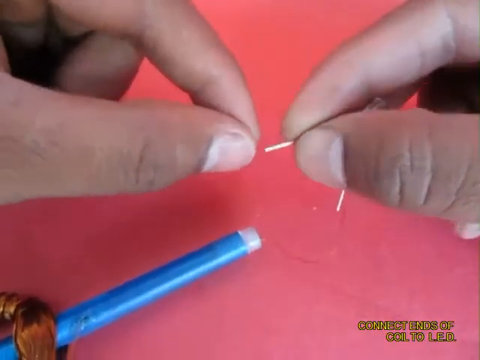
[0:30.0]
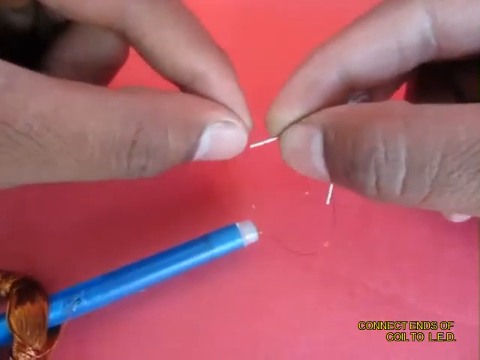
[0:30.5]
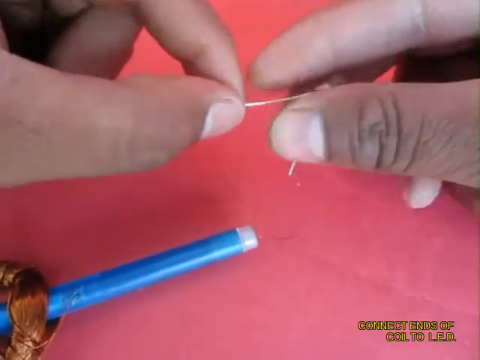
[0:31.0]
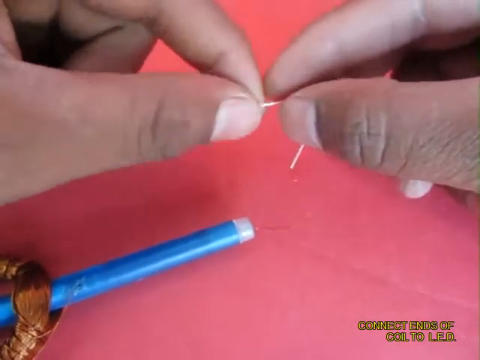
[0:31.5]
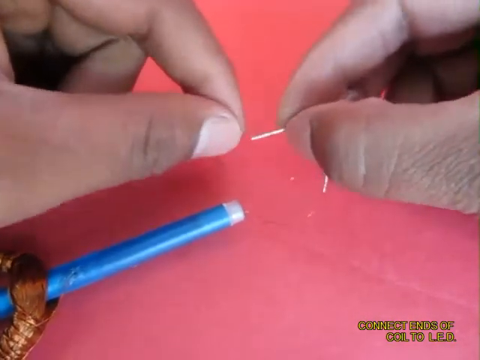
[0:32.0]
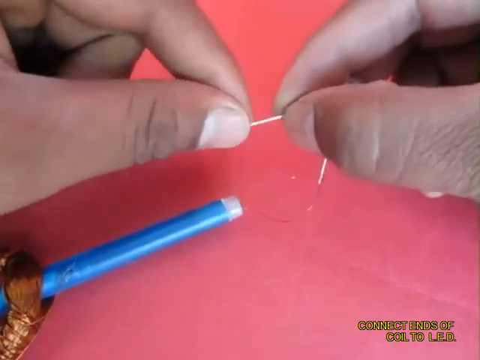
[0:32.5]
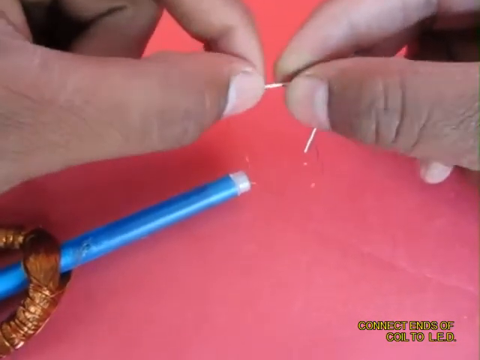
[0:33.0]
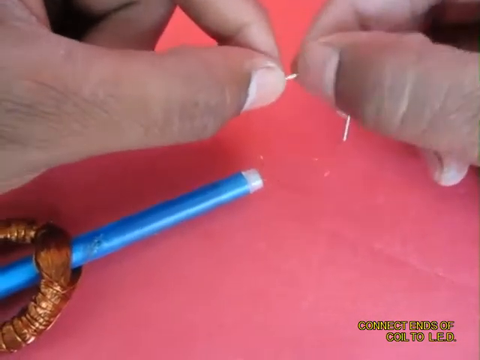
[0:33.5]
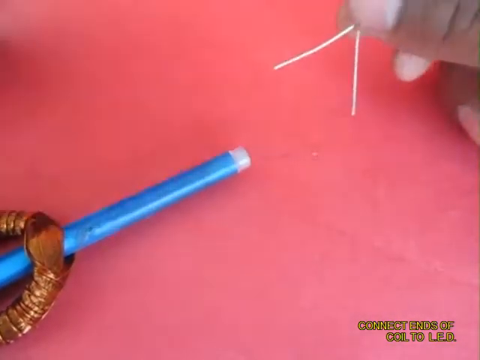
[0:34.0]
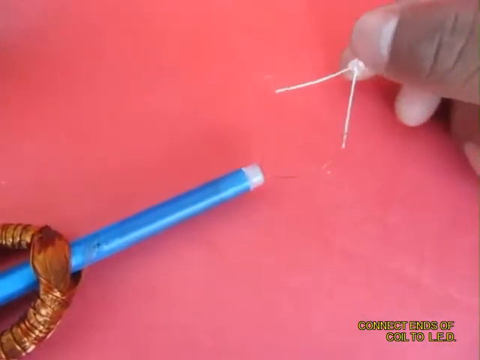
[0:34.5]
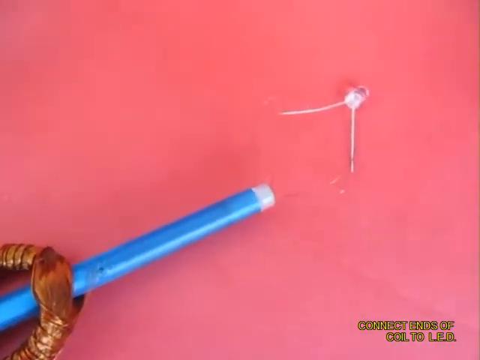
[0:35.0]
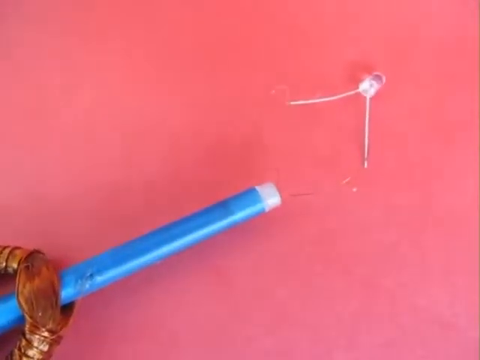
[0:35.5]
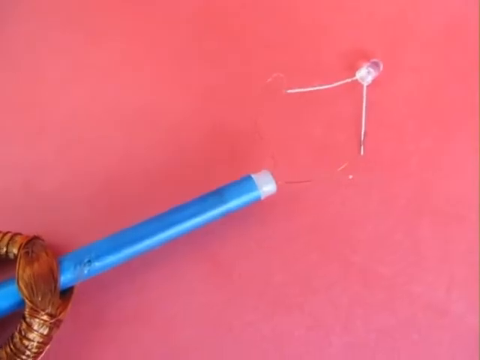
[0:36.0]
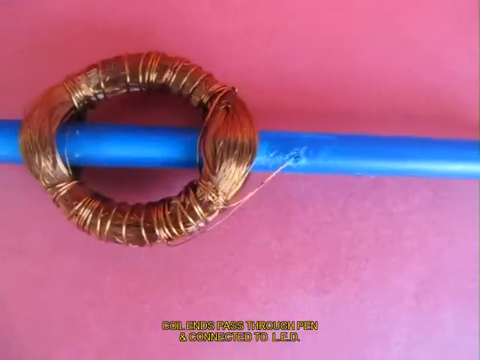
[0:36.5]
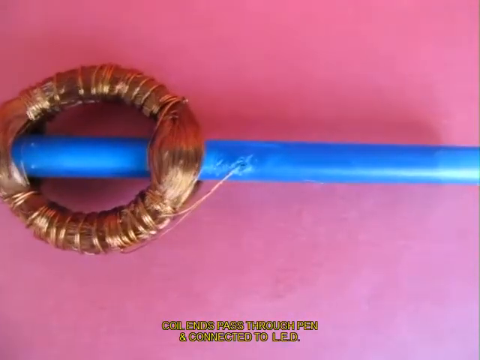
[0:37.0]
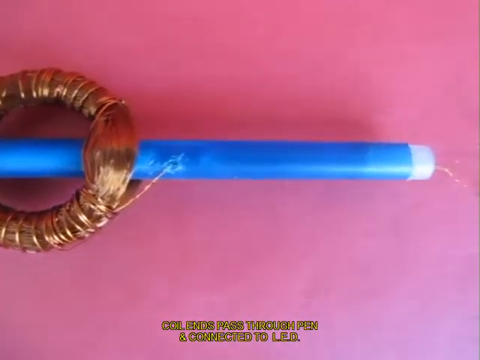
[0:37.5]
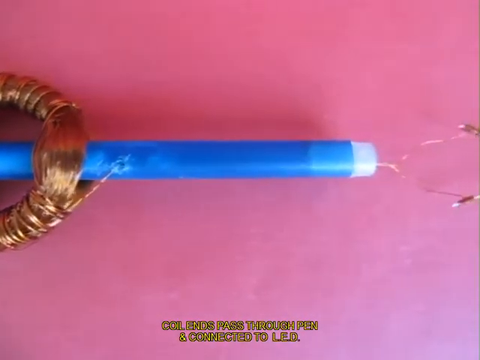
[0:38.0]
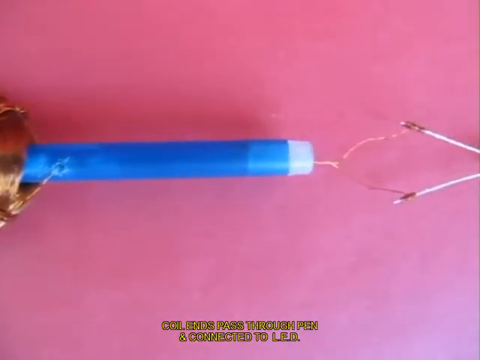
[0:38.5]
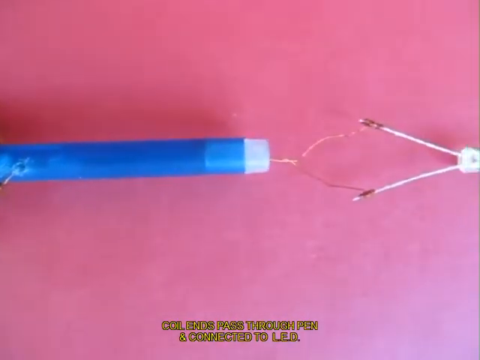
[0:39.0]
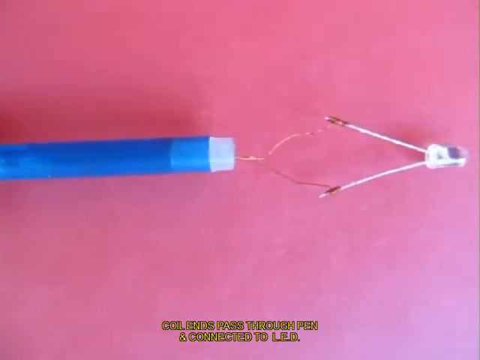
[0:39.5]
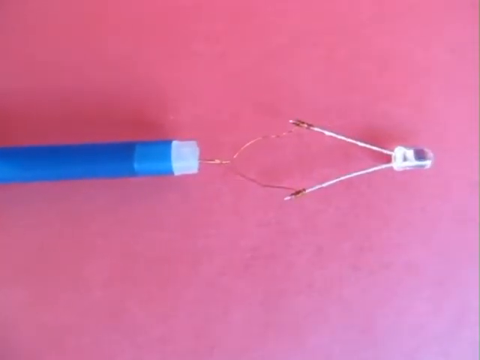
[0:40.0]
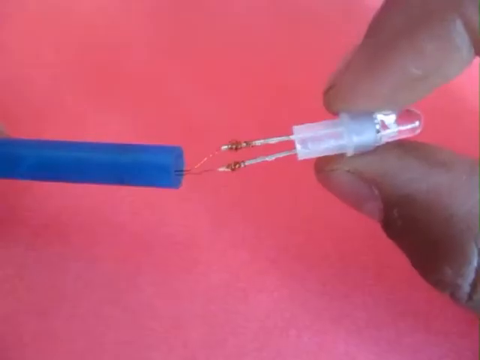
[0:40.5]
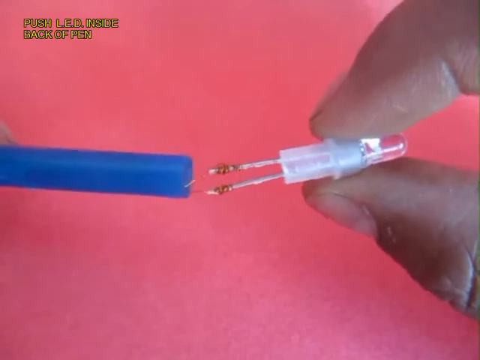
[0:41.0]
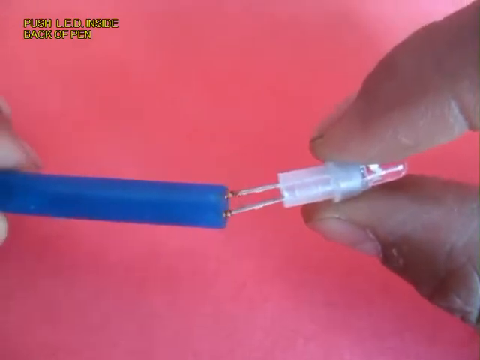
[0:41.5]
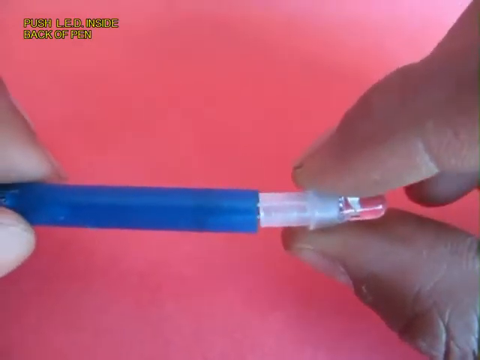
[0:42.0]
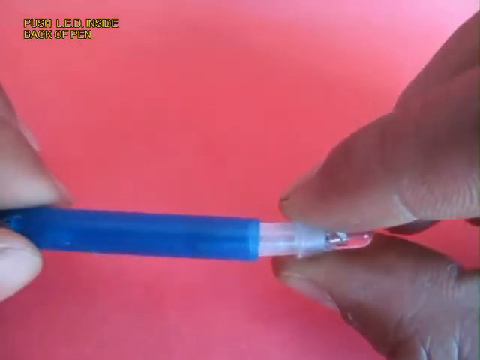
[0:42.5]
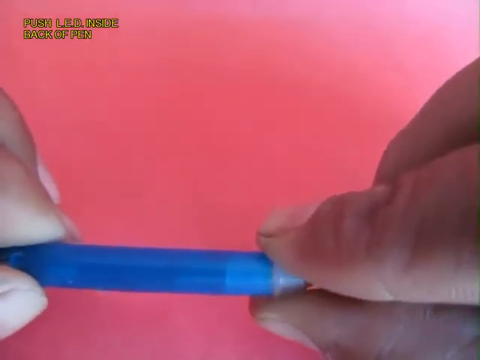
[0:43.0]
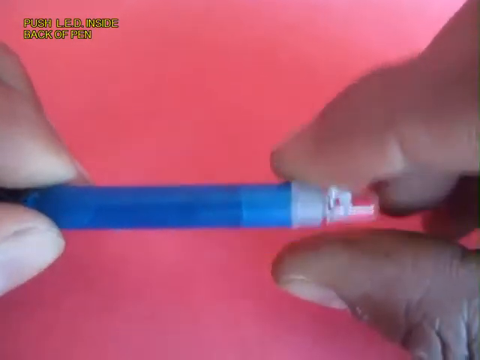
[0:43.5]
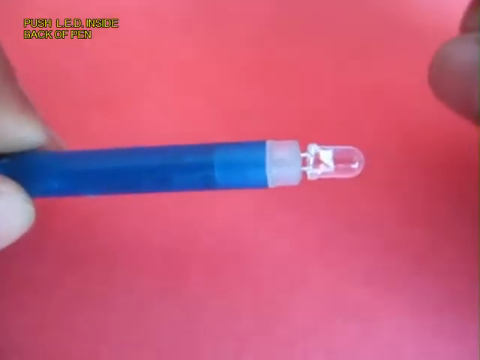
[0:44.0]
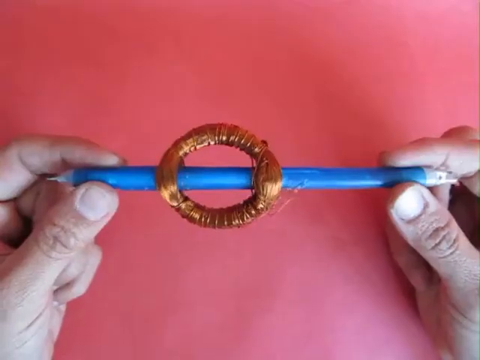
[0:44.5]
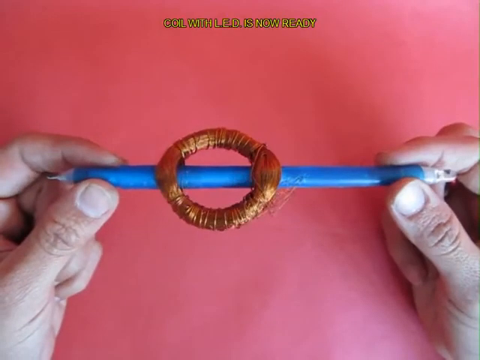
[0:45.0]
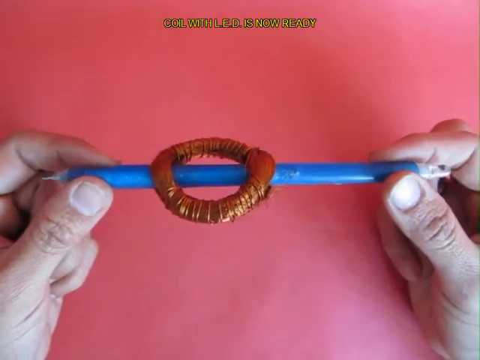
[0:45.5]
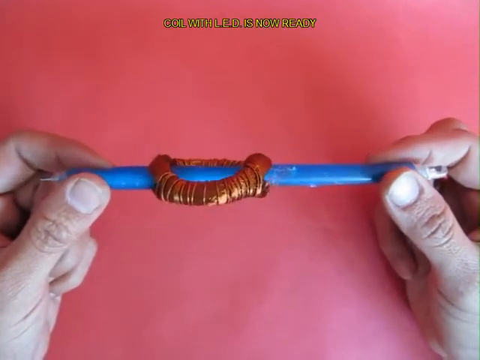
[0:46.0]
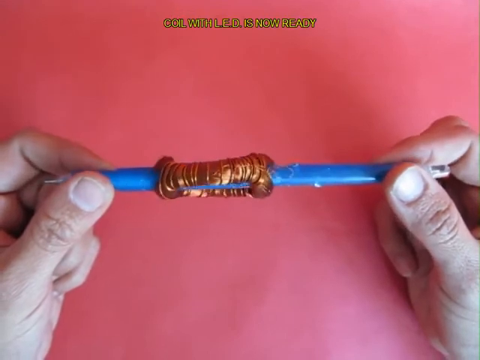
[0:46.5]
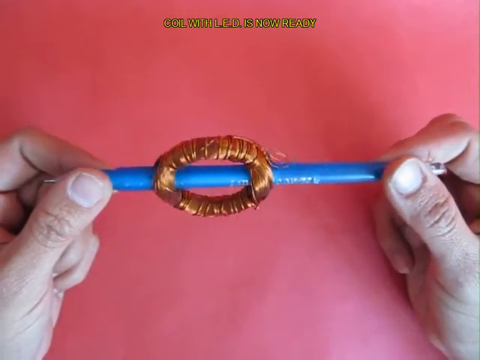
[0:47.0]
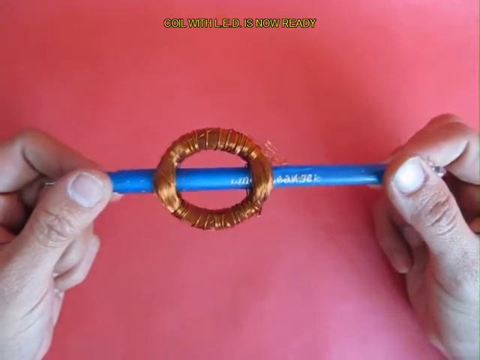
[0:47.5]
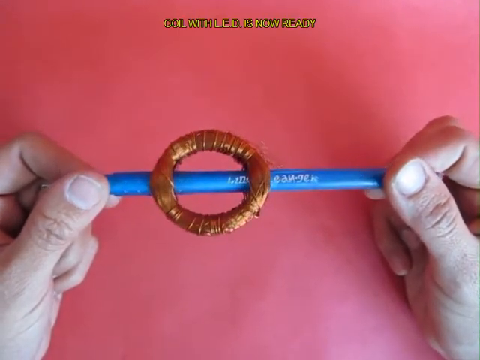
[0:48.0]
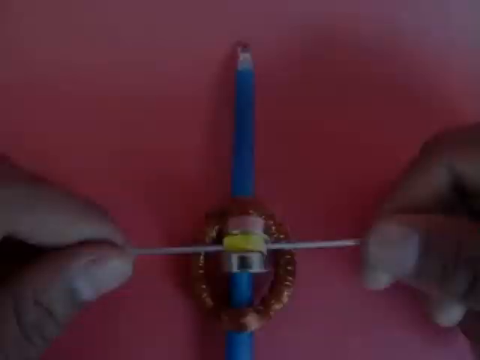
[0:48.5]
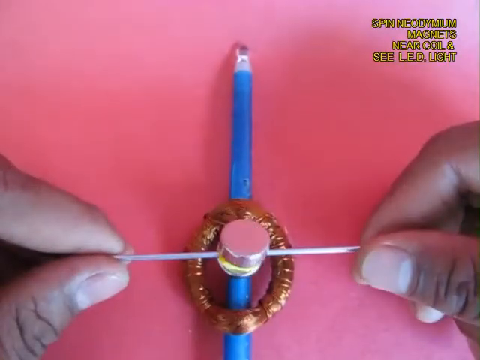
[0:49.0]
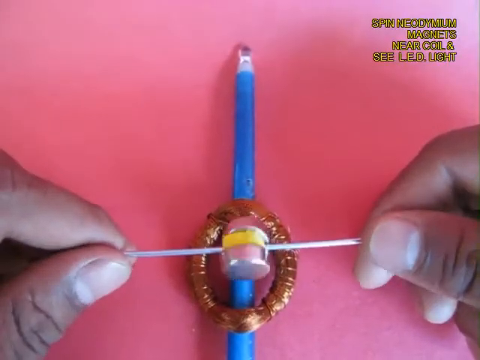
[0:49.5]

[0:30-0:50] The hands continue, the left hand wrapping the wire onto the right side of the metal. The hands leave the screen, leaving the ball pen with the wire wrapped around a piece of metal; the table behind is red and the coil is still on the ball pen. The scene transitions to the copper coil around the ball pen, and the camera shifts toward the right to show its end. They show the LED going inside the back of the pen, sliding it through until it connects with the pen, and then twirl the ball pen in a circular motion. In a new shot, they put the neodymium magnet near the coil and twirl it around with both hands, followed by a shot of the ball pen with the copper wire and the neodymium magnets.